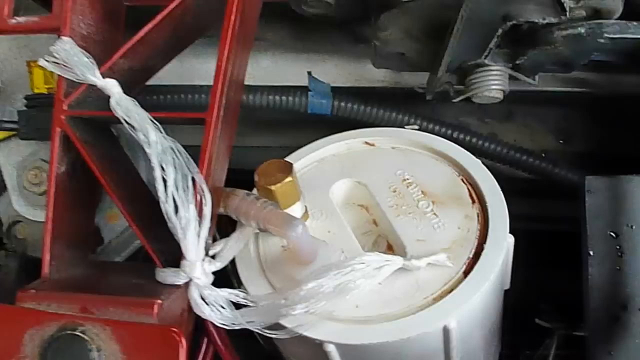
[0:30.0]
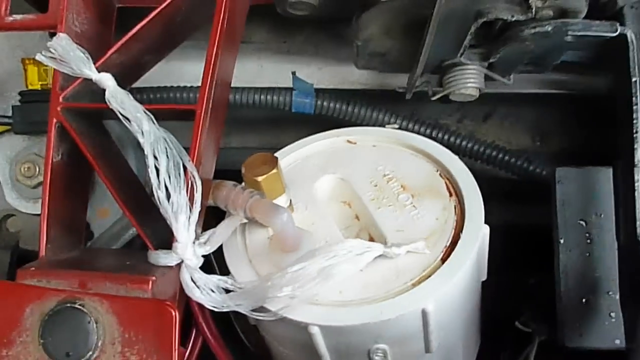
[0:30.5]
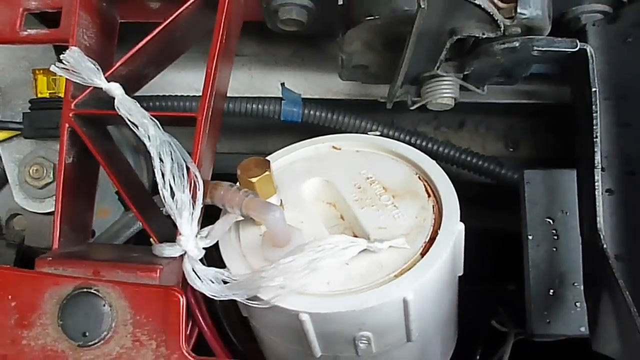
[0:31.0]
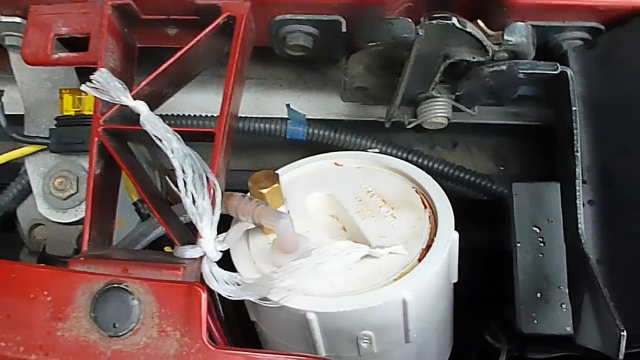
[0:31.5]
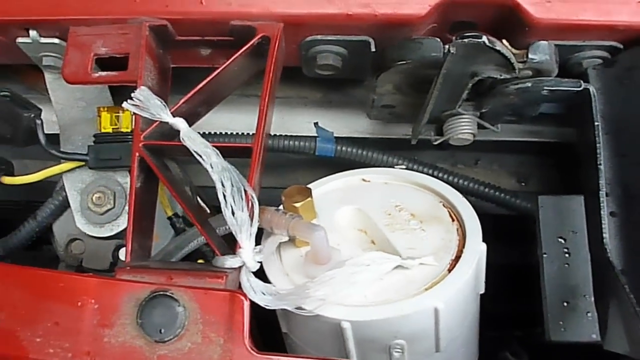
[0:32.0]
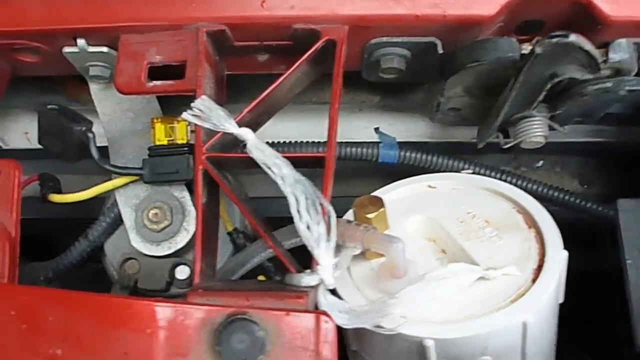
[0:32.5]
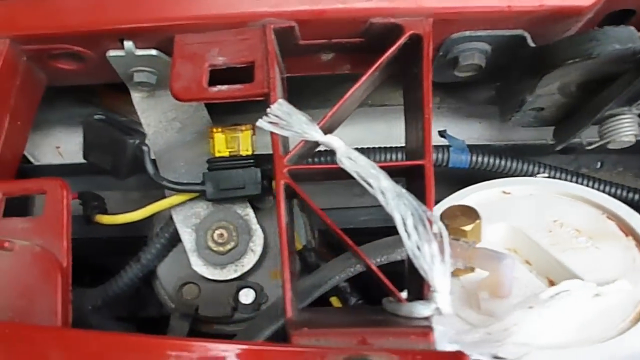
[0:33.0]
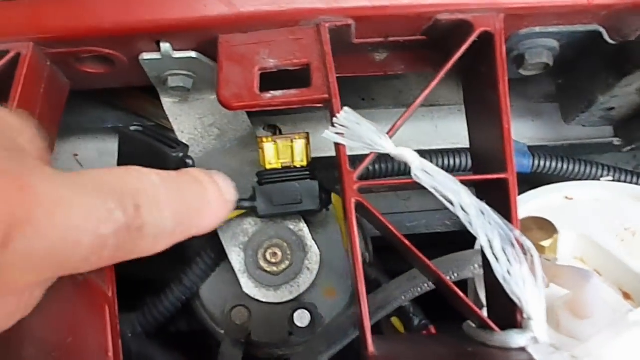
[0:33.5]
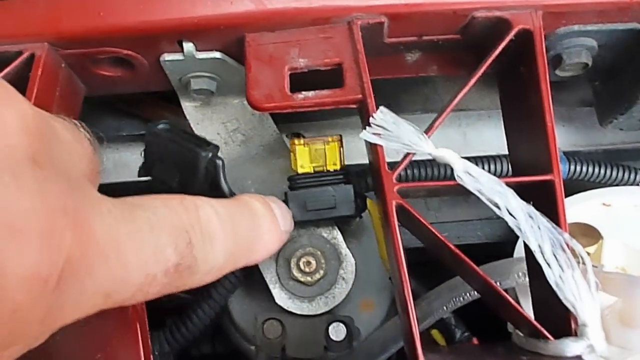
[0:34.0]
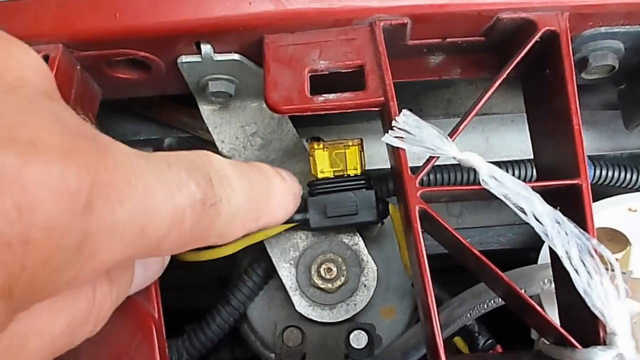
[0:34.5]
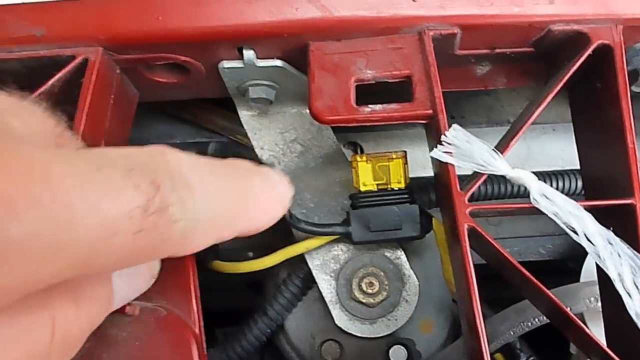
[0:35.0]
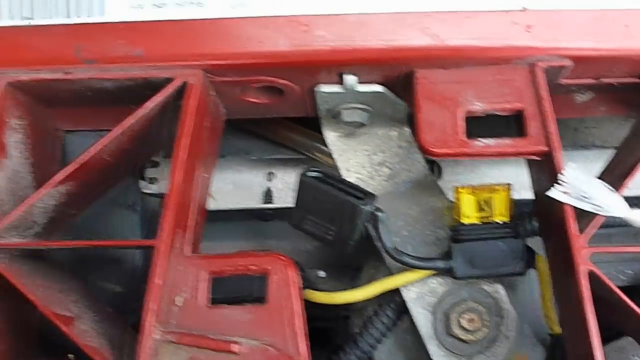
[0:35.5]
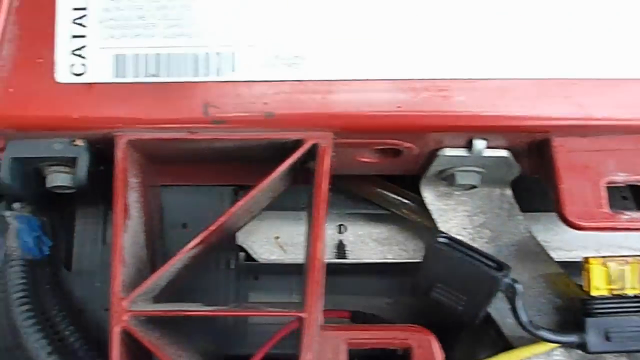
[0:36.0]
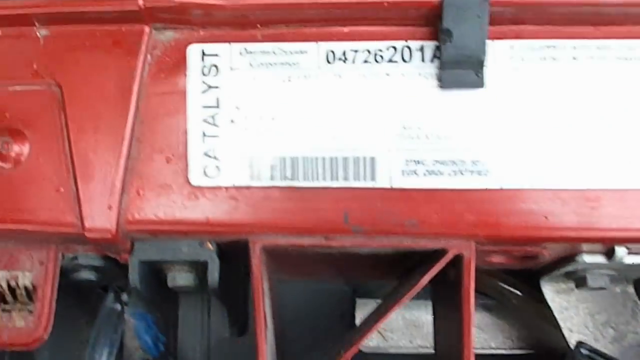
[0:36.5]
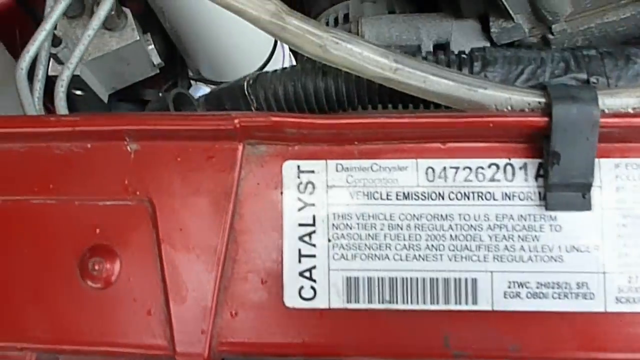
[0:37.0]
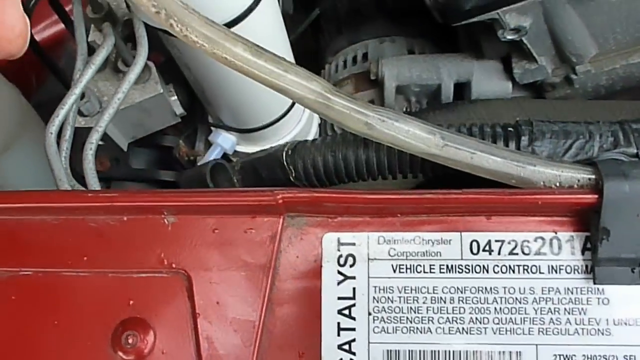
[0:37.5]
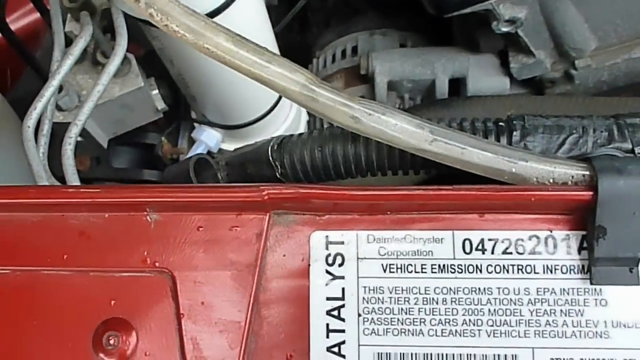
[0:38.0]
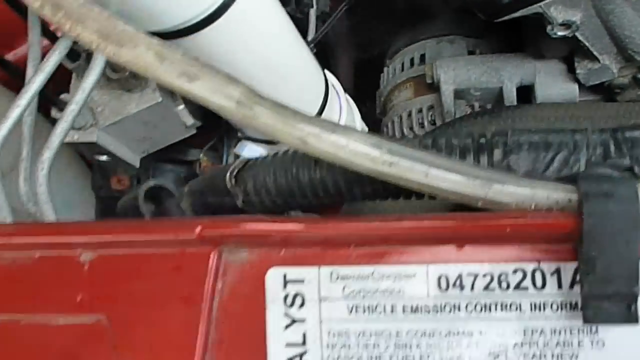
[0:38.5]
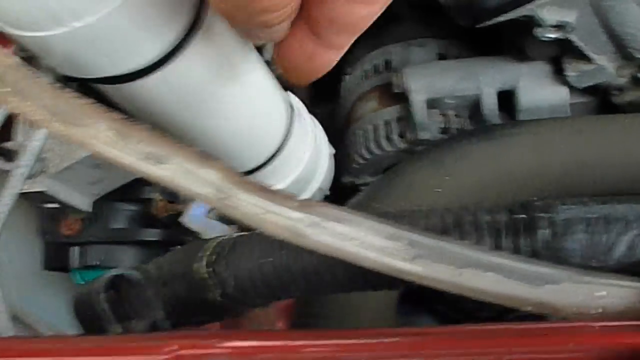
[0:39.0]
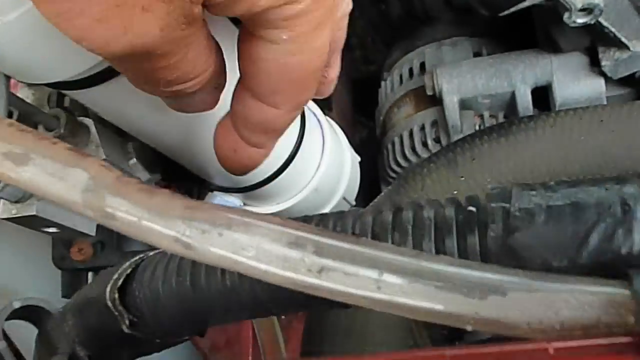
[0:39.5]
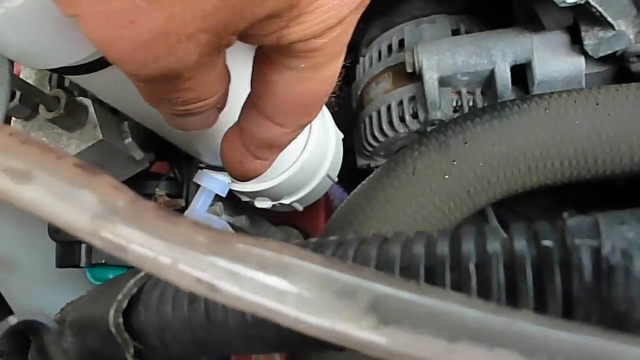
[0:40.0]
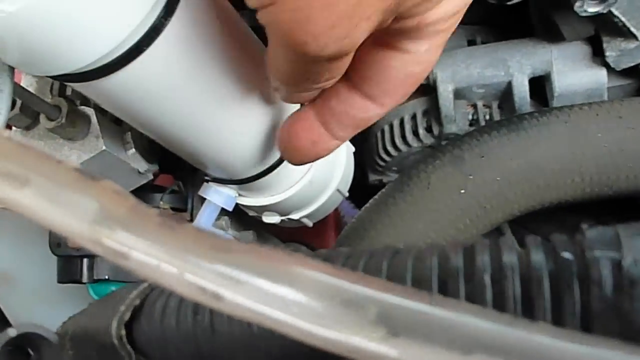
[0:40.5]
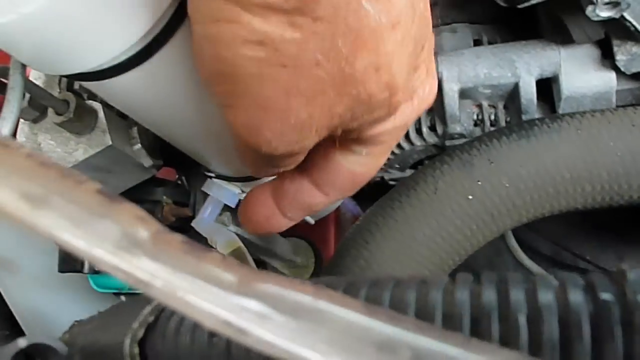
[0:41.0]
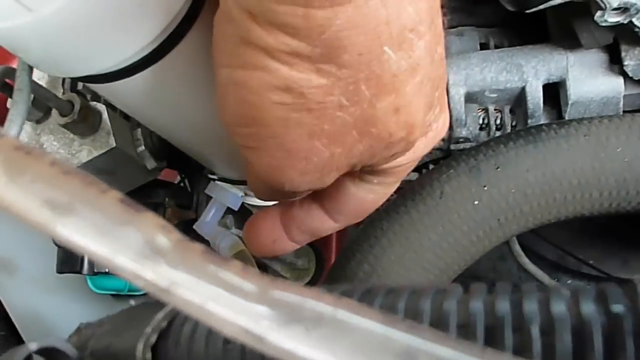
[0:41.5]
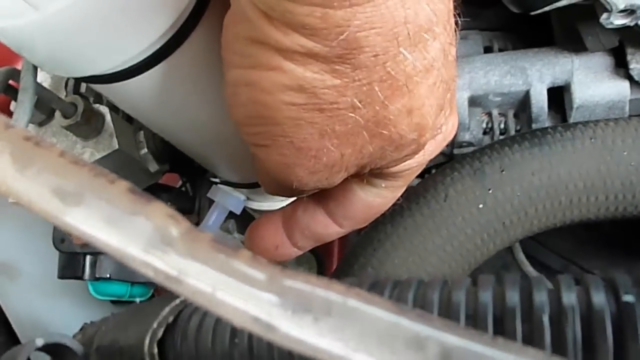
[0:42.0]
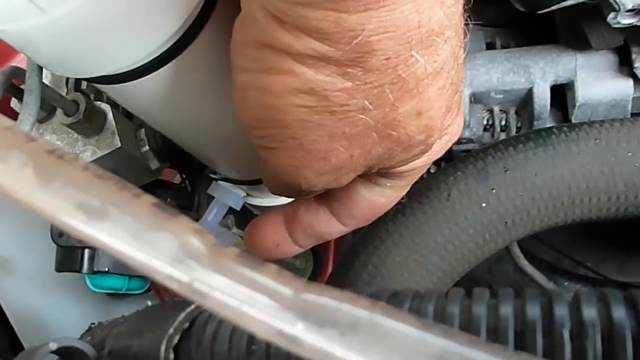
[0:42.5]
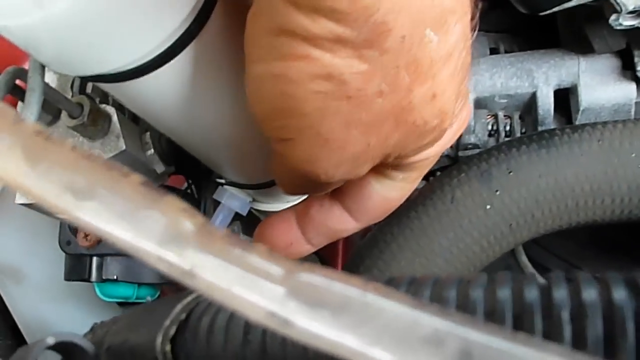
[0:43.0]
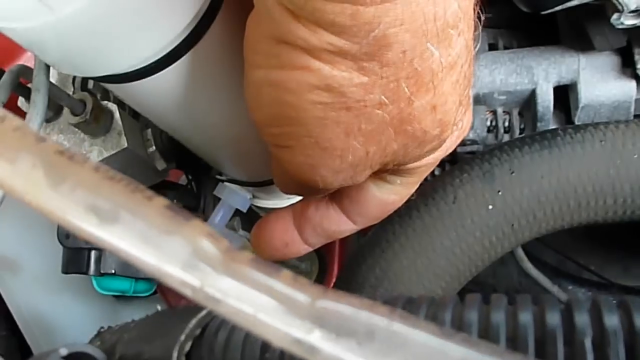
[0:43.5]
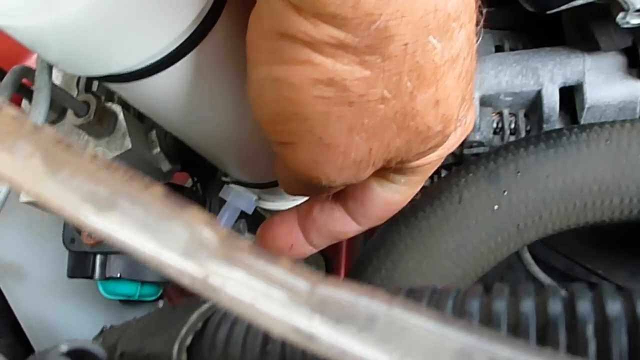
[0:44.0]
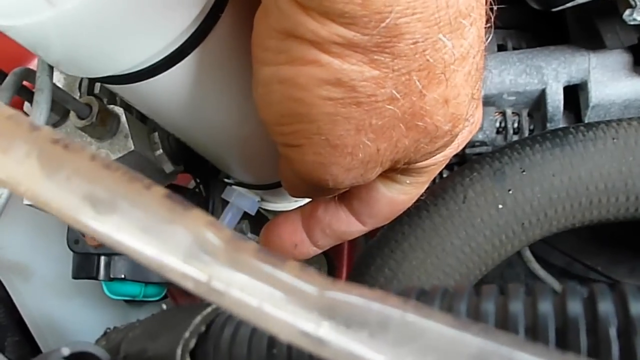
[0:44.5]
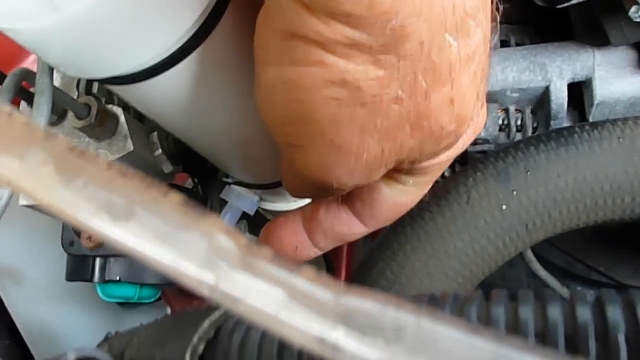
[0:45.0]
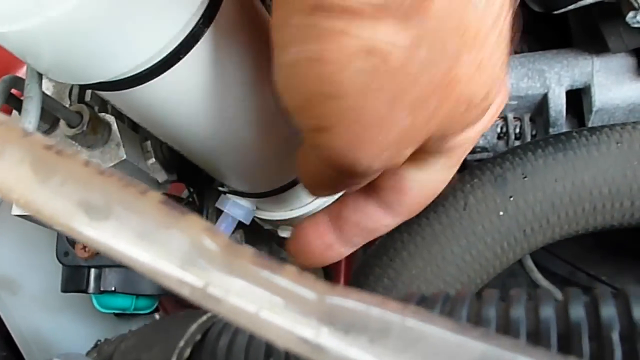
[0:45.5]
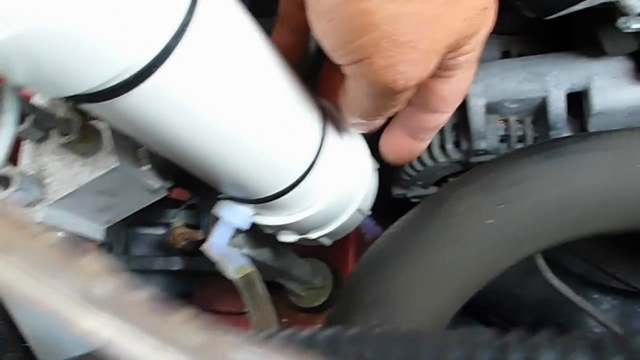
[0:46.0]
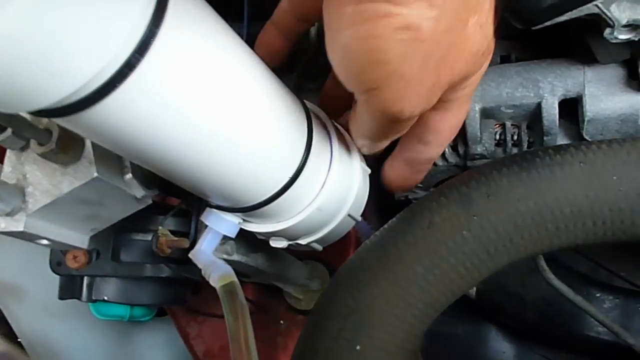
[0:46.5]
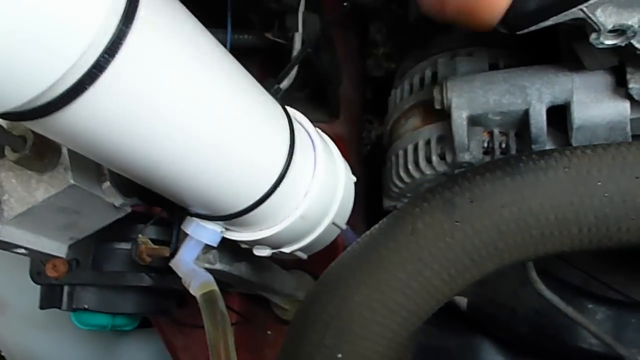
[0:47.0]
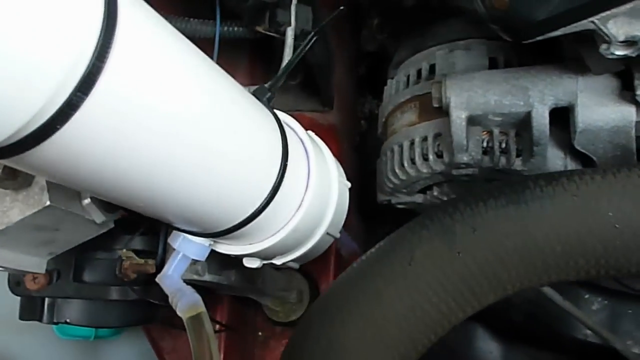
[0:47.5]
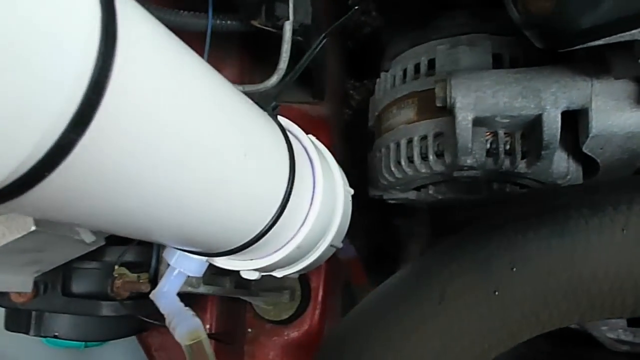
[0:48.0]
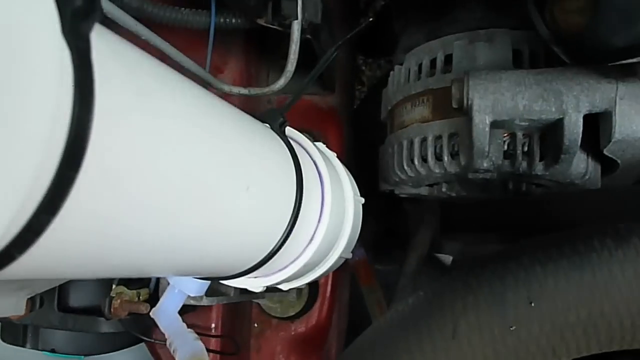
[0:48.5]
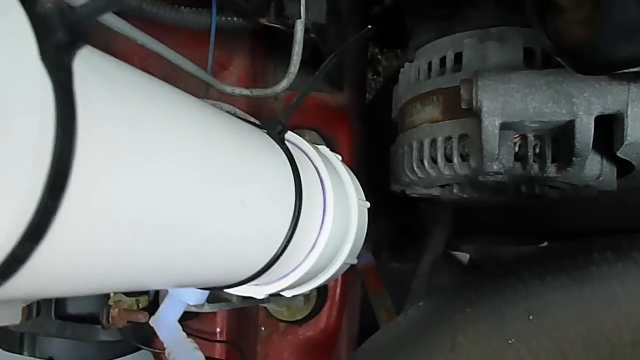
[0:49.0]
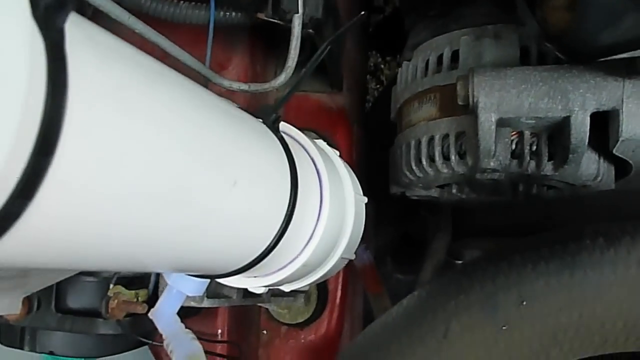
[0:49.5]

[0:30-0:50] The camera pans left from the white cylinder, and the man's hand points to some connector wires. The camera continues further to a large, tall white cylindrical tube that looks like PVC pipe, with connecting hoses going to its base; it seems to be held in place with black zip ties or something similar. The connector he pointed out is black with a black cap, and what looks like a yellow plastic fuse is inserted there. An overhead shot looks down into the engine compartment, zoomed in close, showing other hoses and tubes and his hand pressed way down inside, pointing out several things. The camera work is not great, but the warping is diminished.